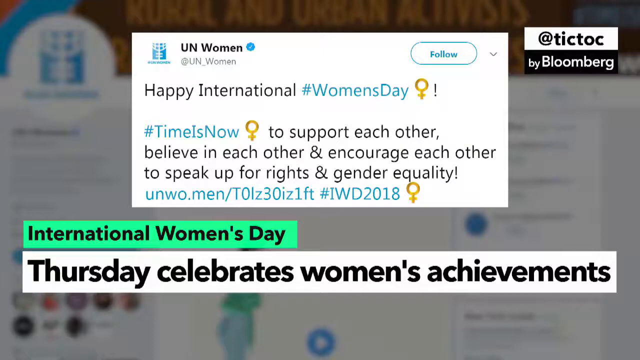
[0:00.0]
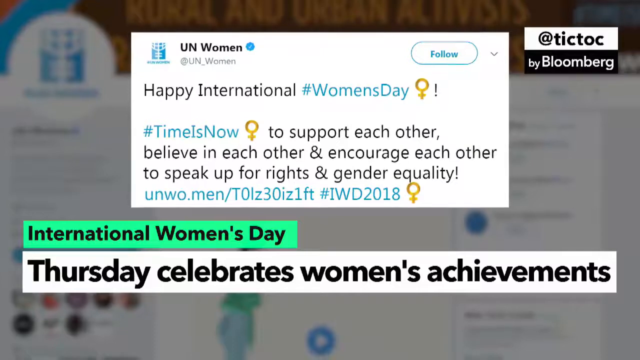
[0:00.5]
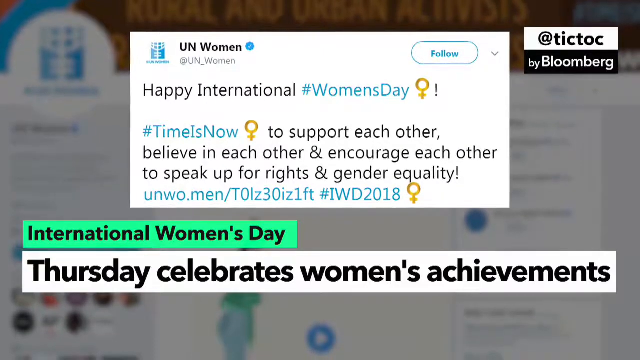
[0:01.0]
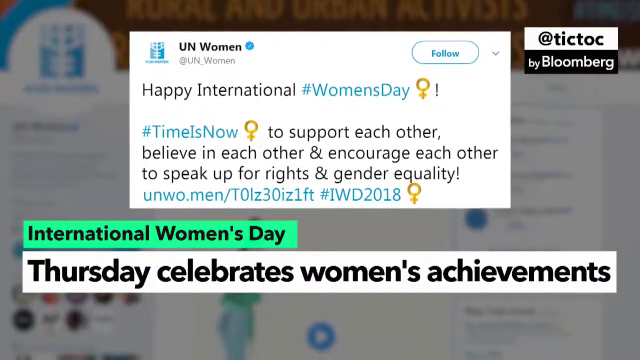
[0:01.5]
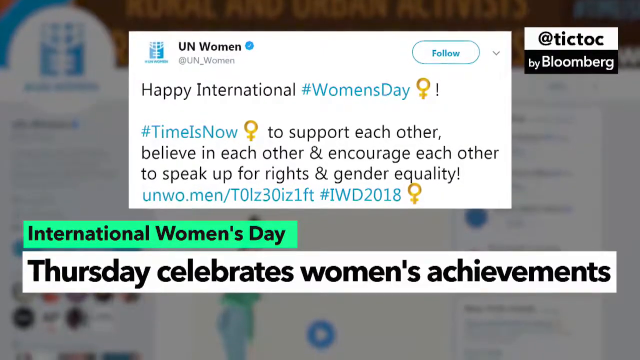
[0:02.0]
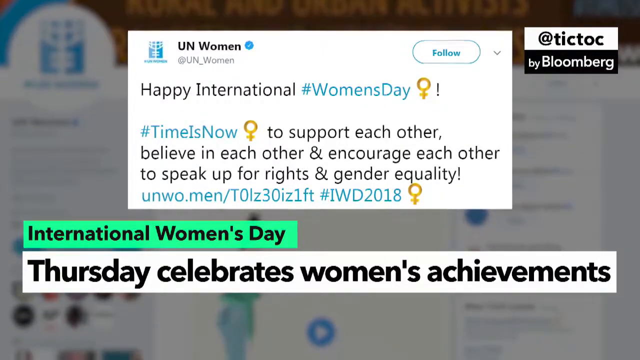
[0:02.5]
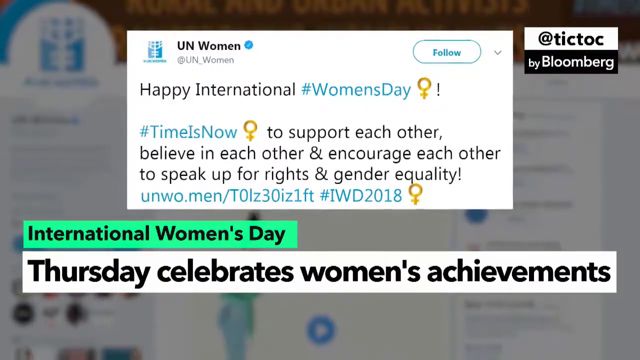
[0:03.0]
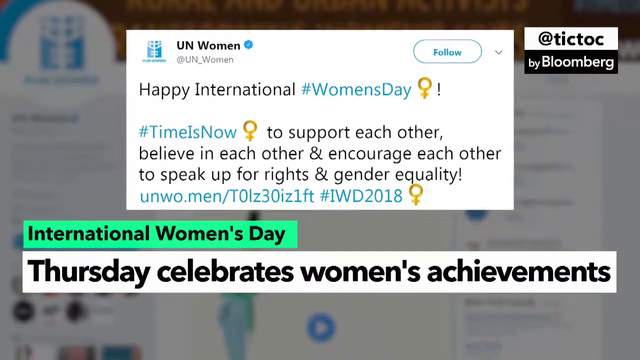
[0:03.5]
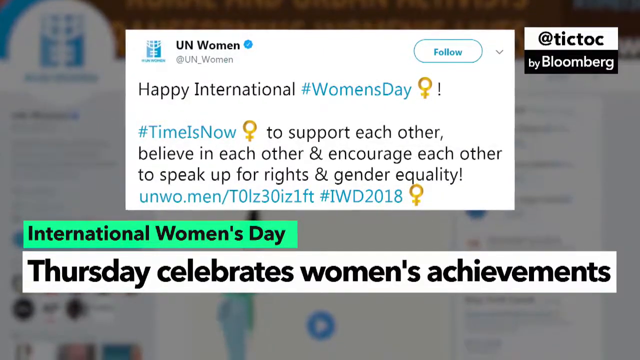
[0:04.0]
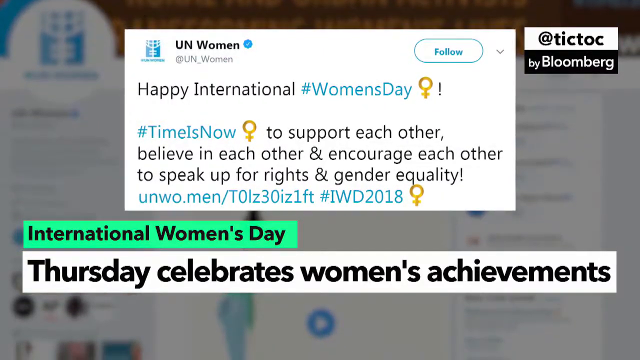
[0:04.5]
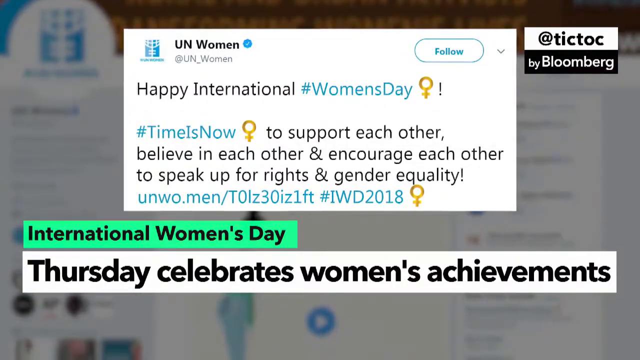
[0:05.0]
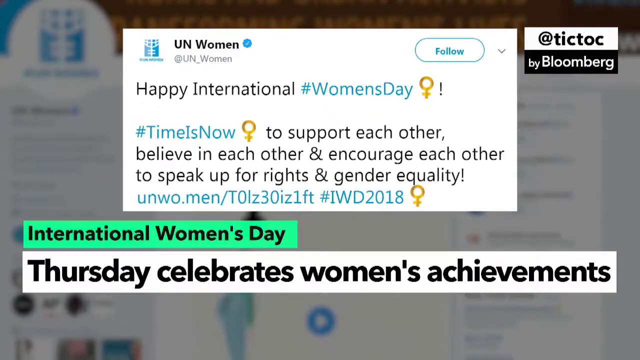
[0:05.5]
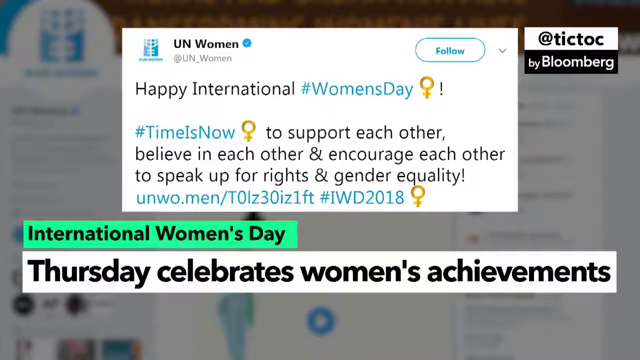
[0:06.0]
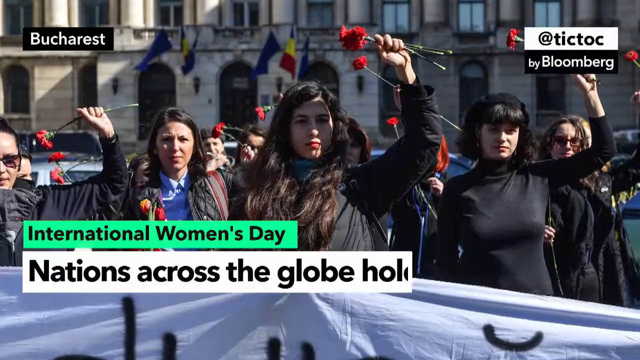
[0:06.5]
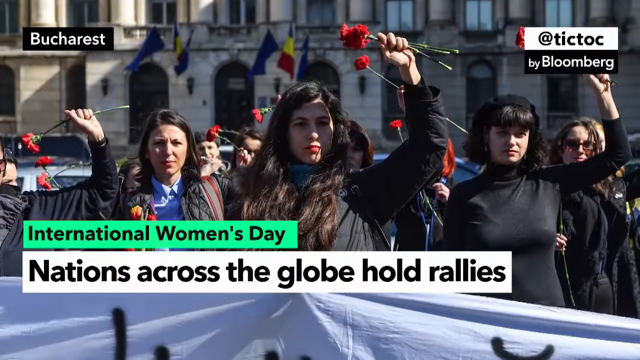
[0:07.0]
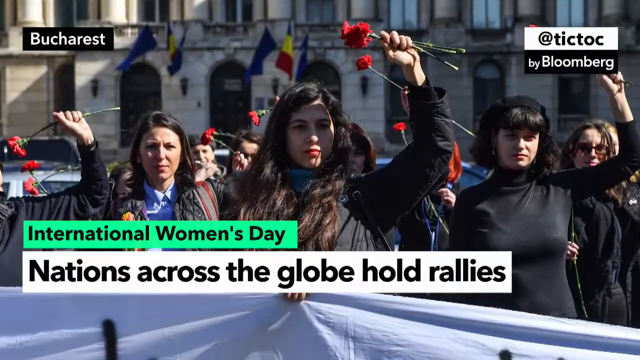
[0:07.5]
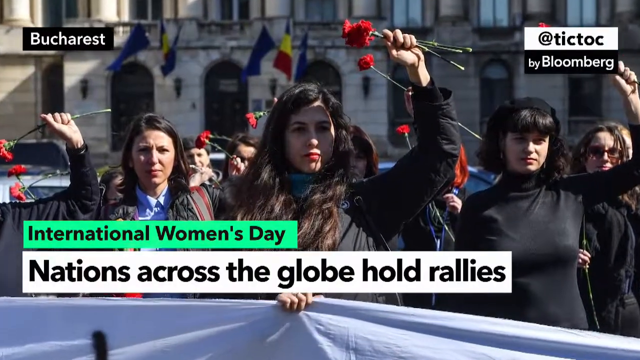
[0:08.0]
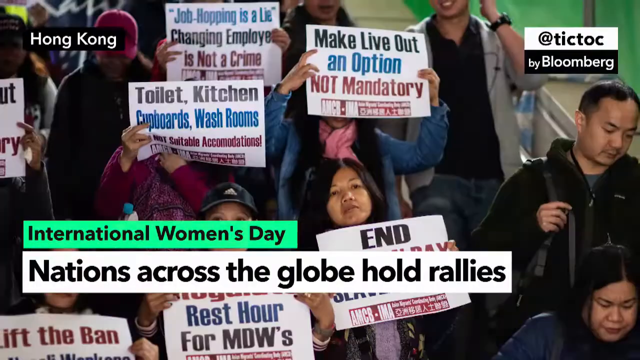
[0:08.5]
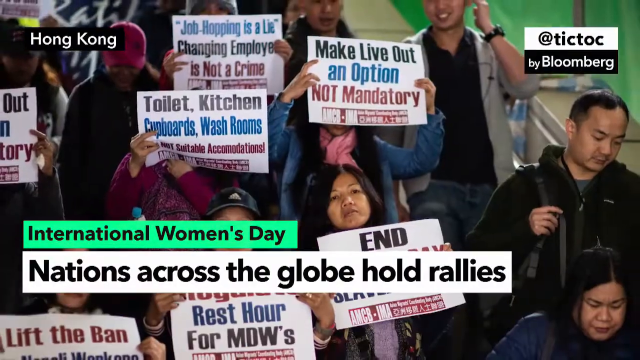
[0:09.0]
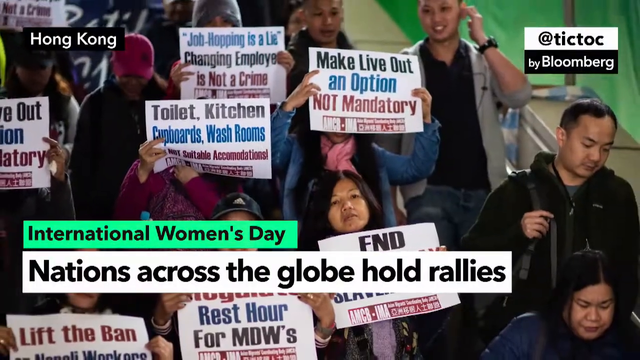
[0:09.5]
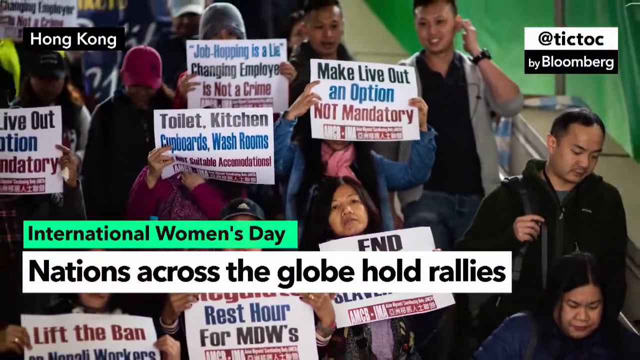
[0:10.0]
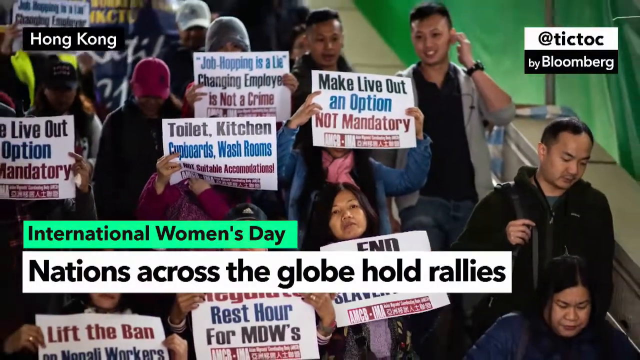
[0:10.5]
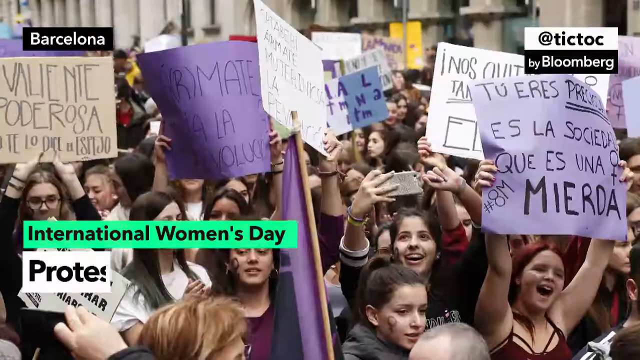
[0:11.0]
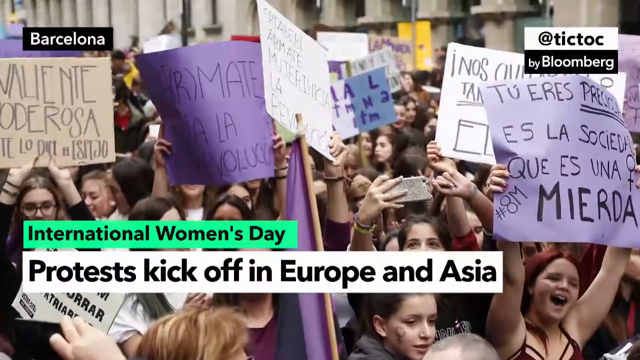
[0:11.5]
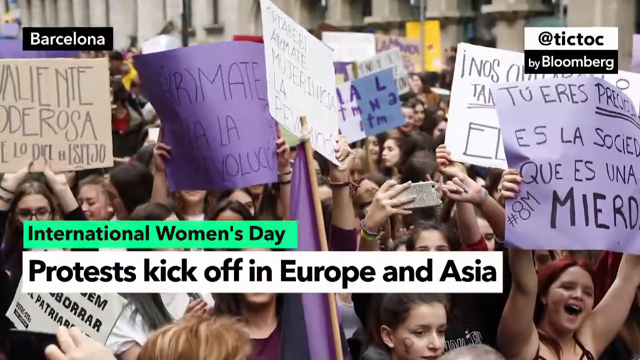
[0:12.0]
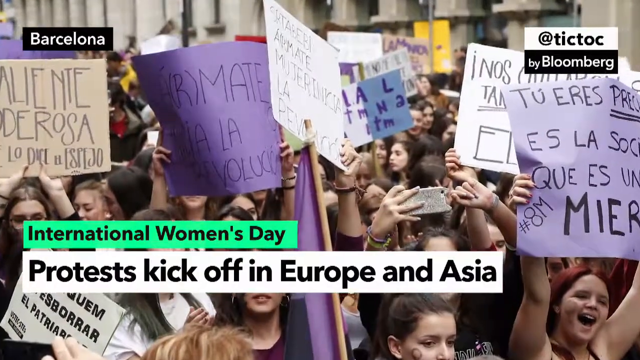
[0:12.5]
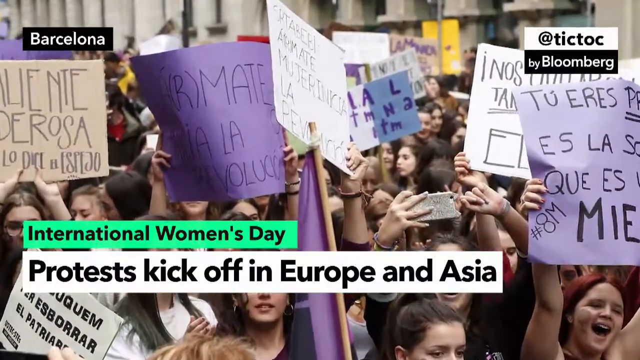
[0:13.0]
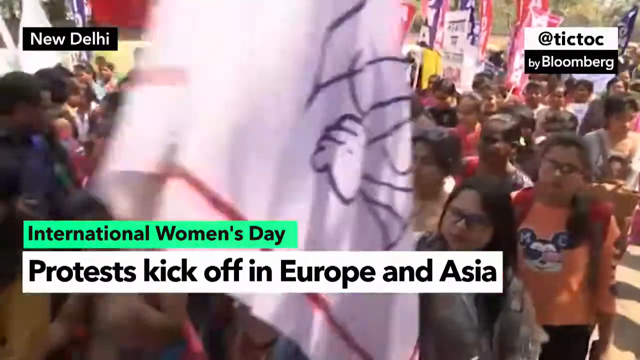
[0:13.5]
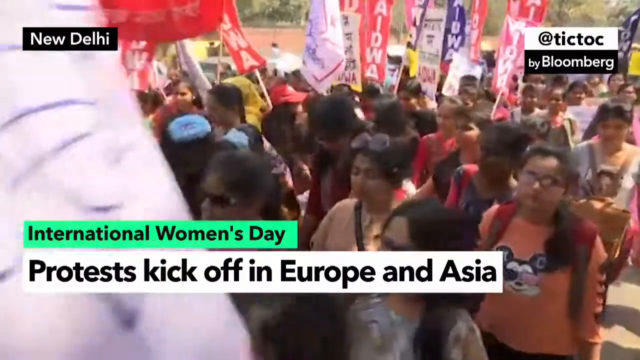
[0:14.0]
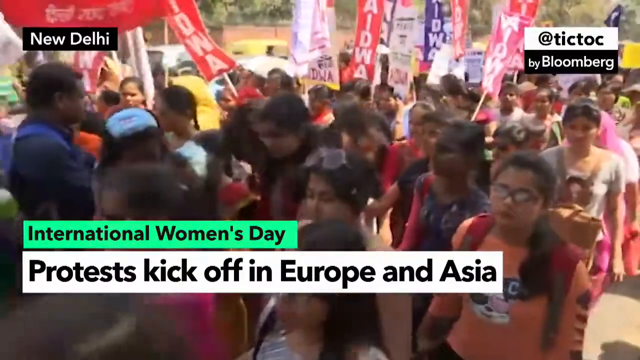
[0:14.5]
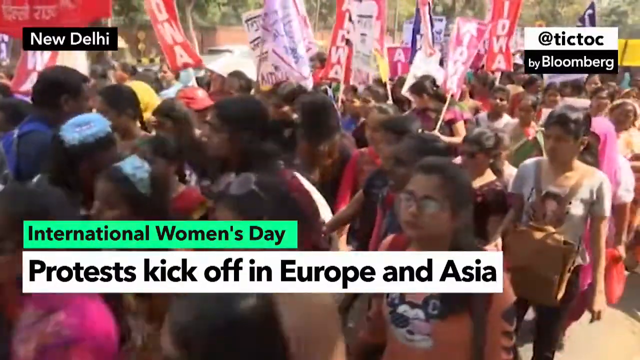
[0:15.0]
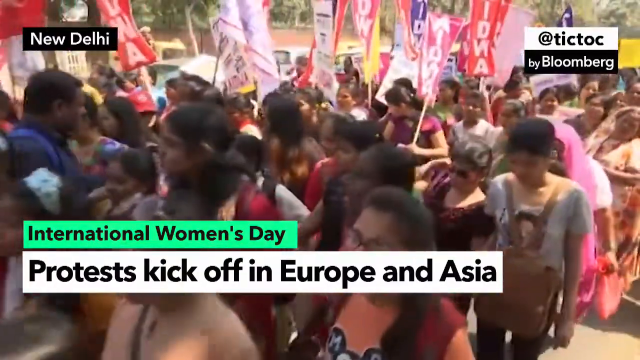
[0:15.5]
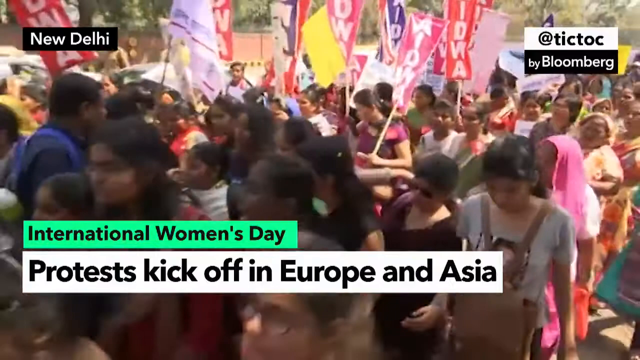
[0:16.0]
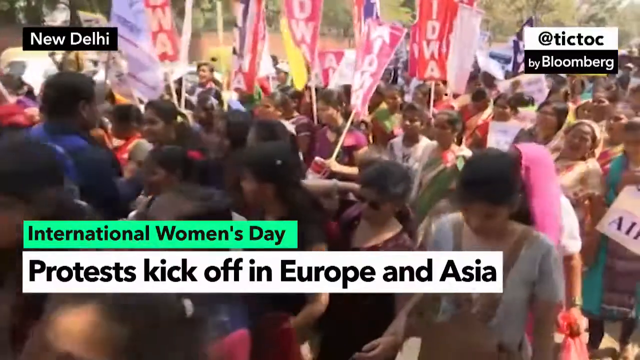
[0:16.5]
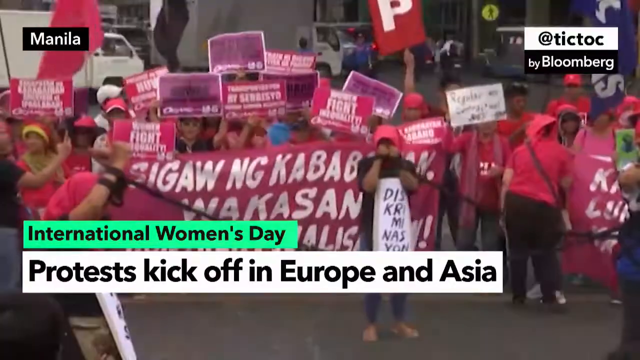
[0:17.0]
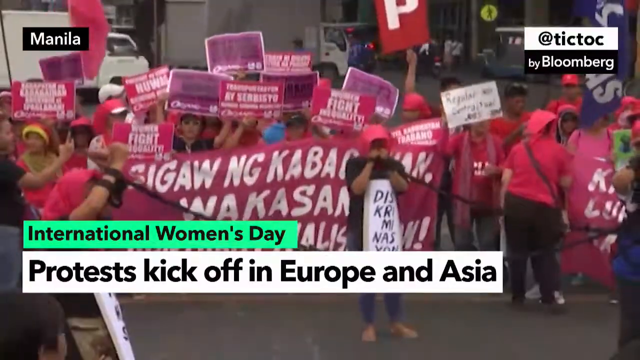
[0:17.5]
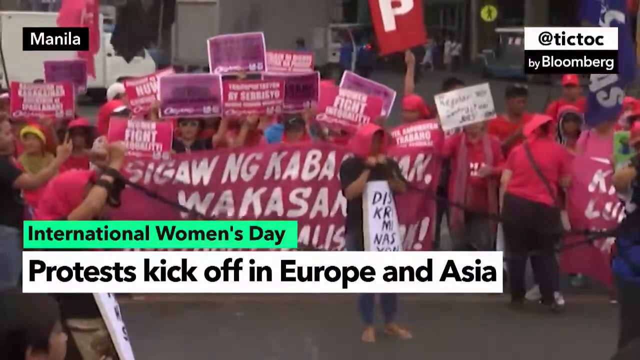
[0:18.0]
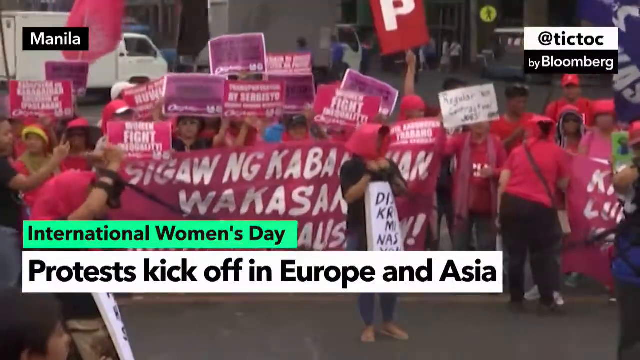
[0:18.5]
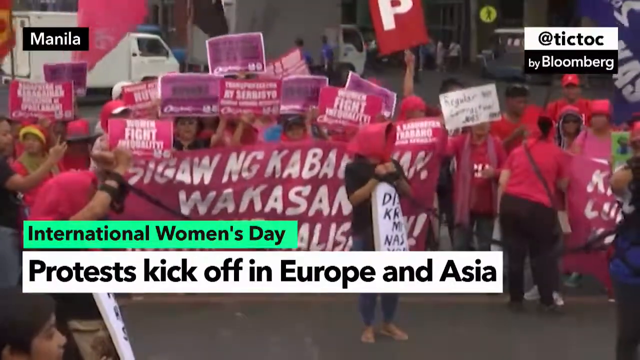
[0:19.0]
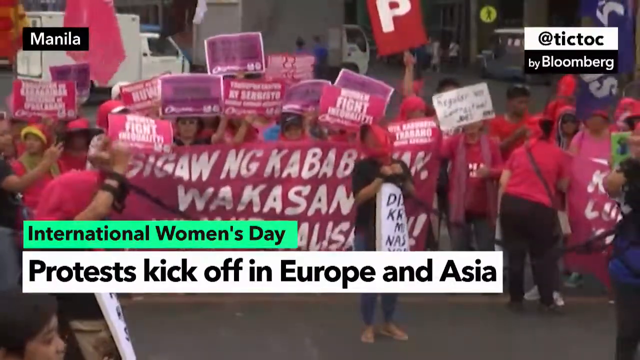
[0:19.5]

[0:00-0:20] A Twitter post from the official UN Women Twitter account reads "time is now to support each other, believe in each other, encourage each other, to speak up for rights and gender equality." At the bottom, "UN Women's Day" is written. Text in the top right corner begins "a tiktok", probably the name of the channel that brought out the story. The story is about women and celebrating them on Women's Day. The news continues with text about rallies, from Bucharest, and women are seen with pink flowers in their left hands. The text goes on to mention making a living as a woman, and the men there are just passersby. It is marked as a developing story. In other news, the text mentions protests by people from Europe and Asia, and there is text in Spanish that cannot be made out, about protesting for better treatment of women.